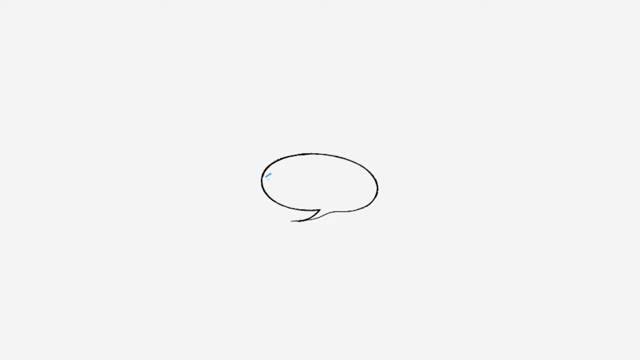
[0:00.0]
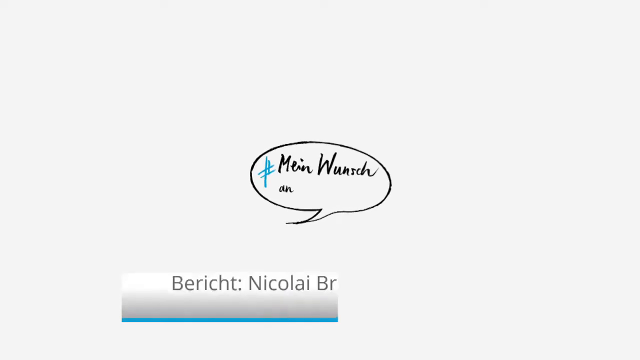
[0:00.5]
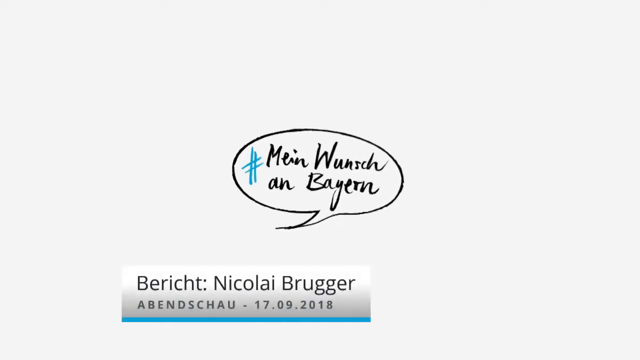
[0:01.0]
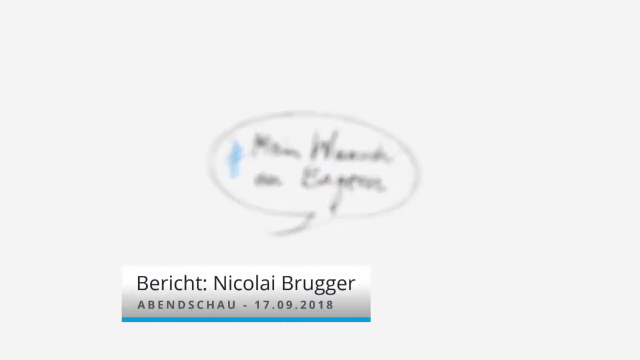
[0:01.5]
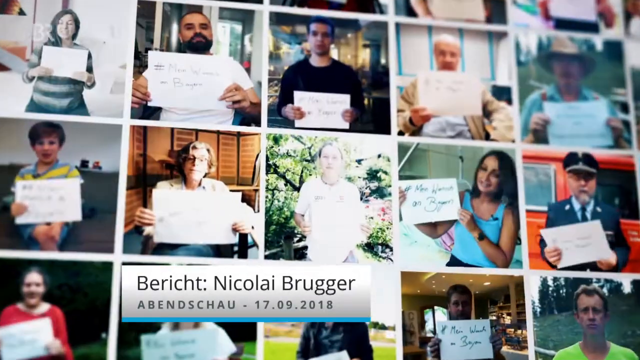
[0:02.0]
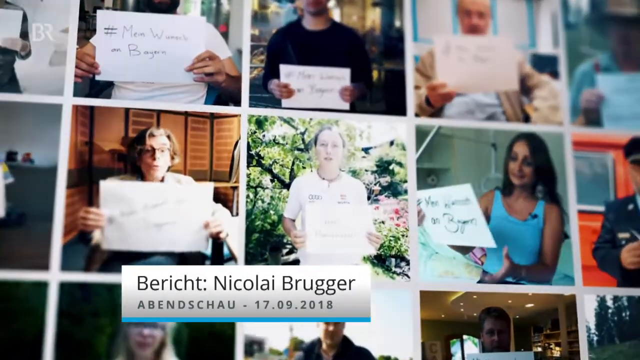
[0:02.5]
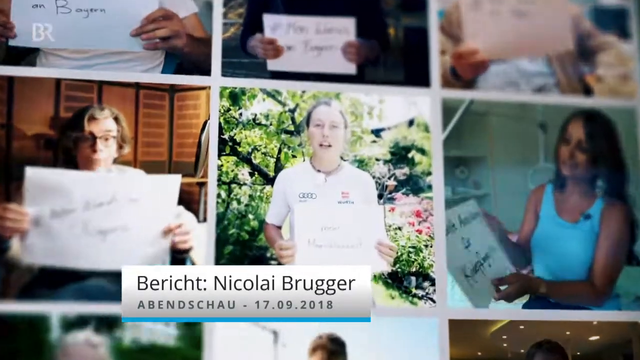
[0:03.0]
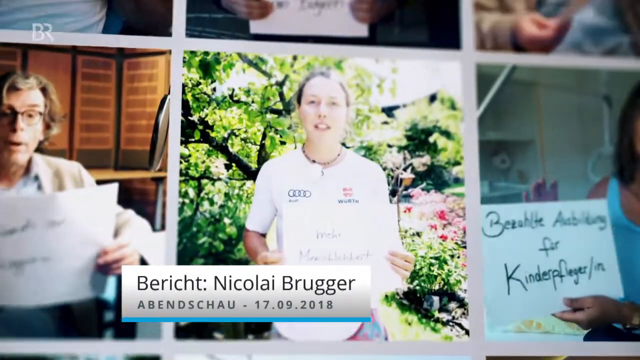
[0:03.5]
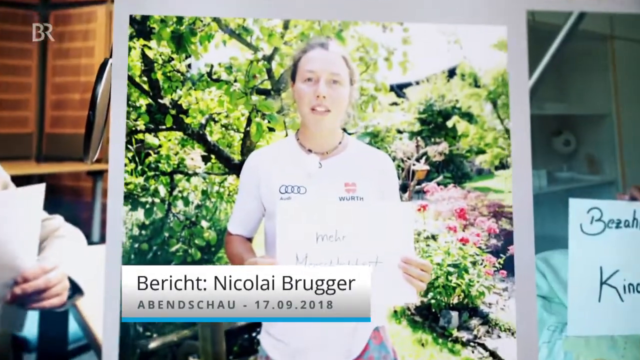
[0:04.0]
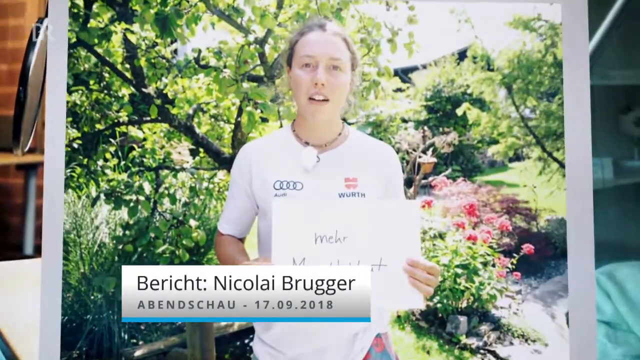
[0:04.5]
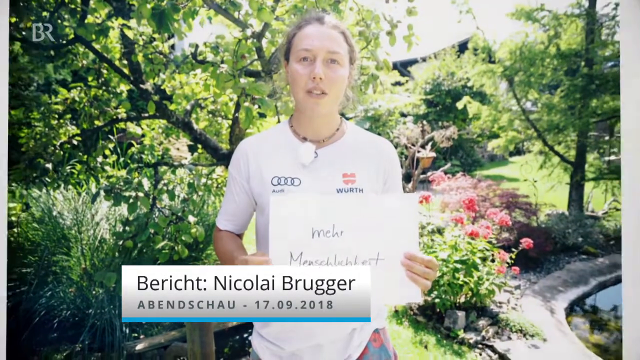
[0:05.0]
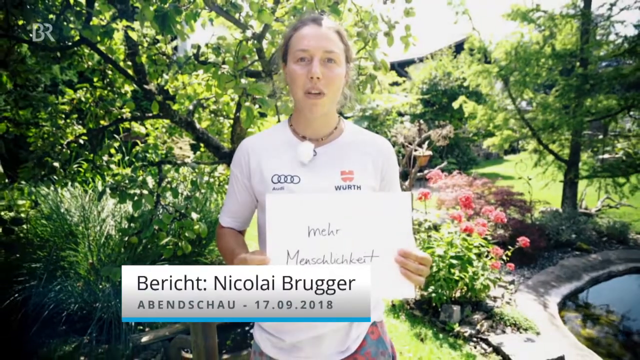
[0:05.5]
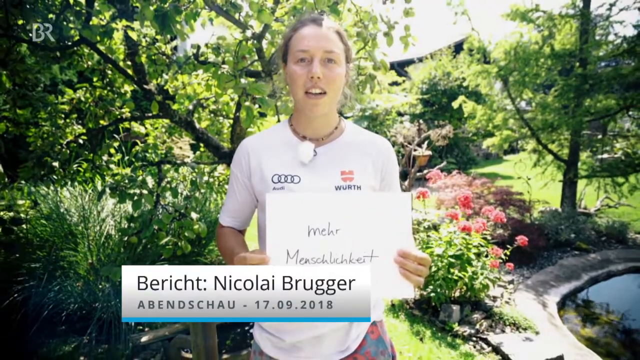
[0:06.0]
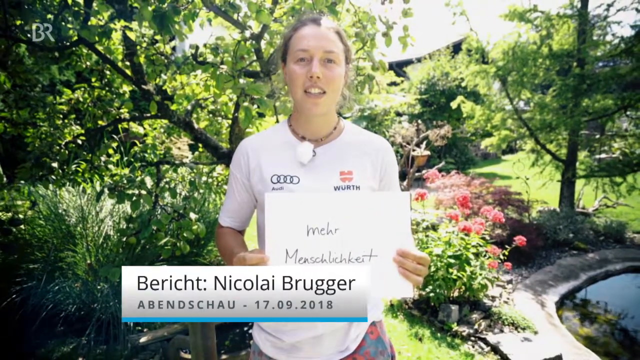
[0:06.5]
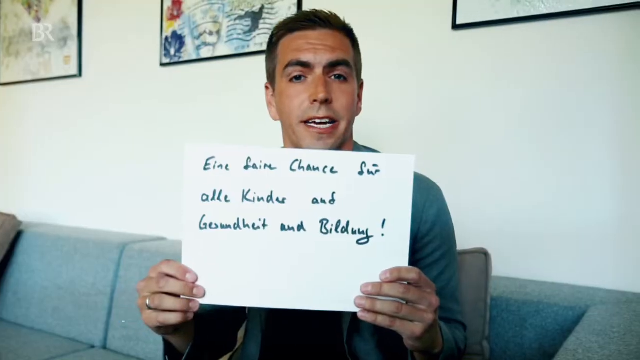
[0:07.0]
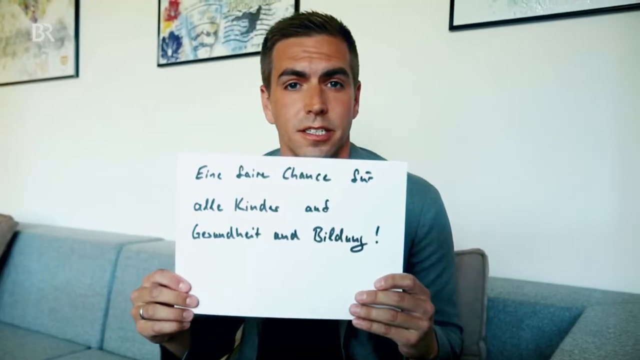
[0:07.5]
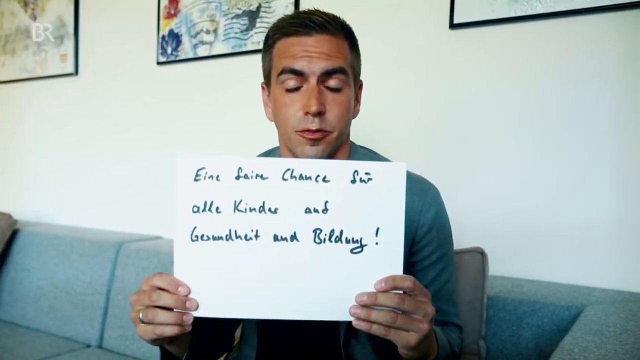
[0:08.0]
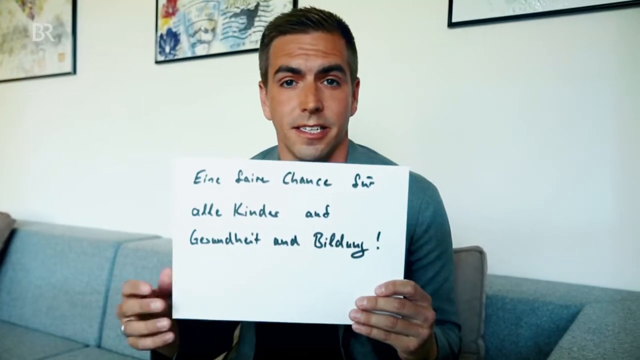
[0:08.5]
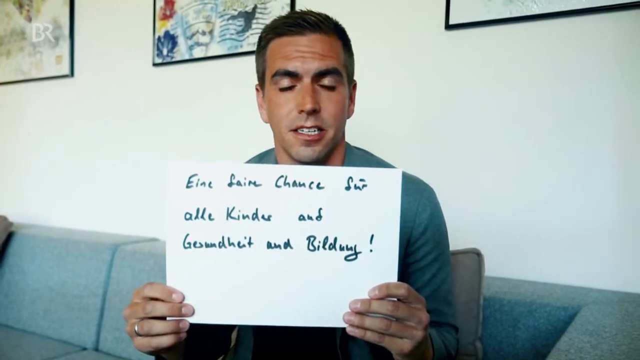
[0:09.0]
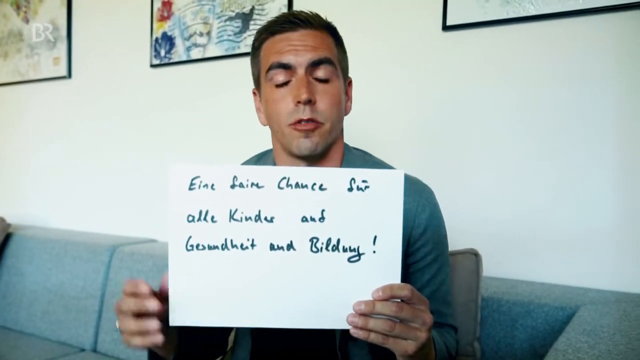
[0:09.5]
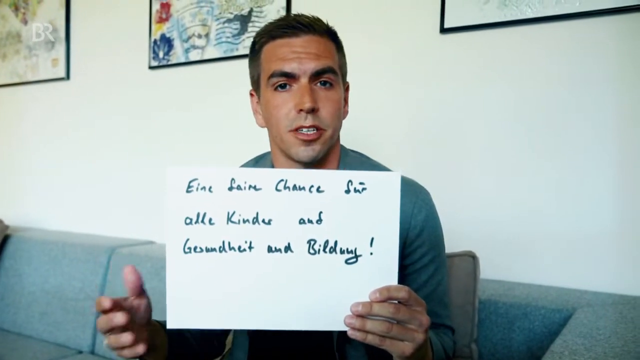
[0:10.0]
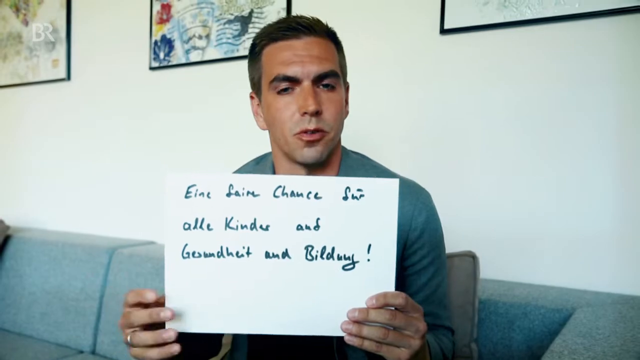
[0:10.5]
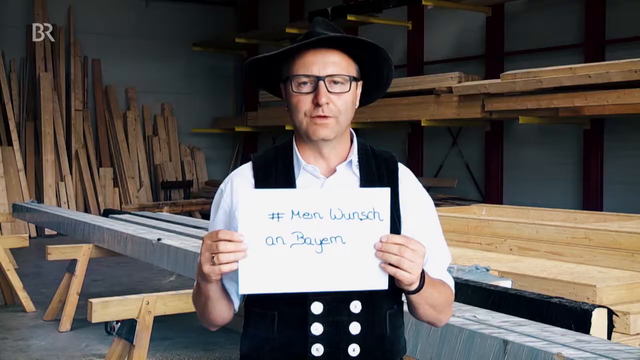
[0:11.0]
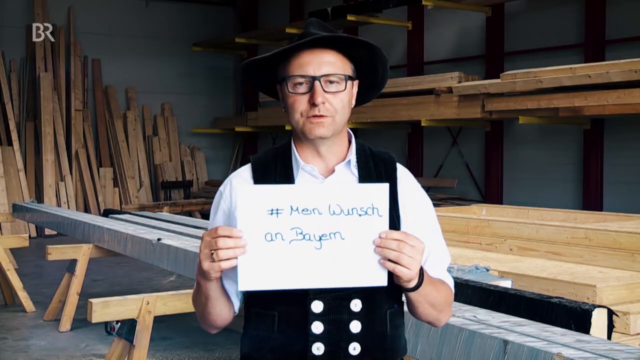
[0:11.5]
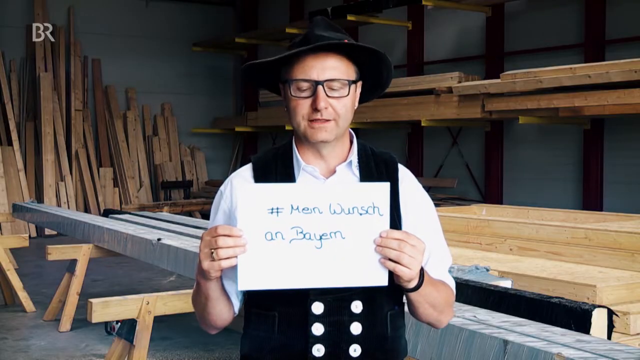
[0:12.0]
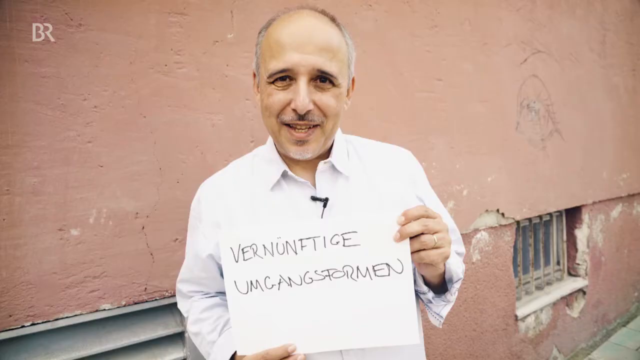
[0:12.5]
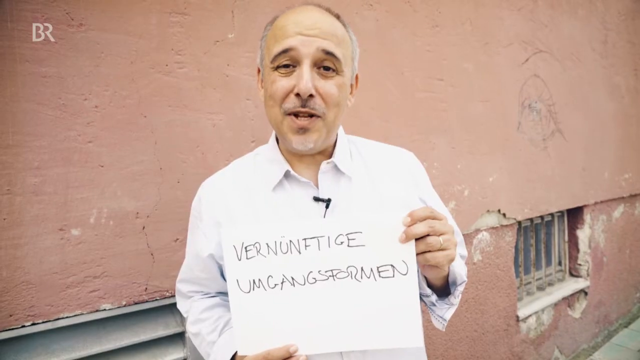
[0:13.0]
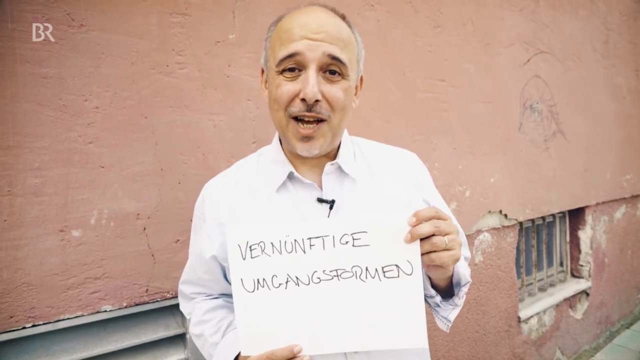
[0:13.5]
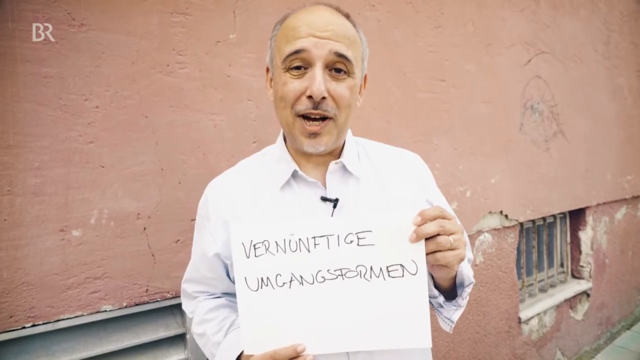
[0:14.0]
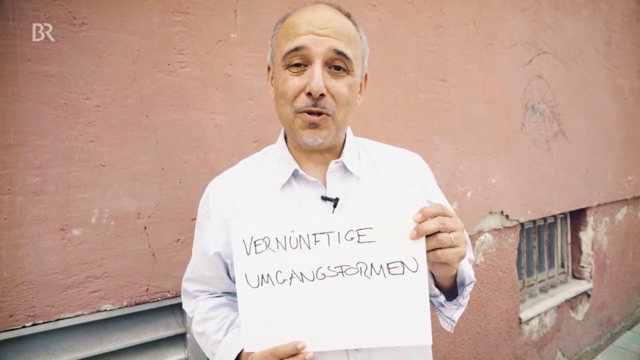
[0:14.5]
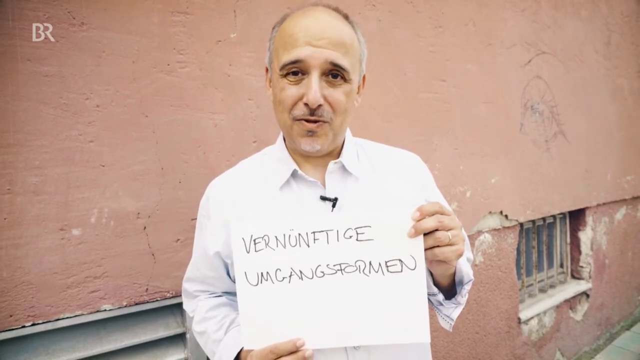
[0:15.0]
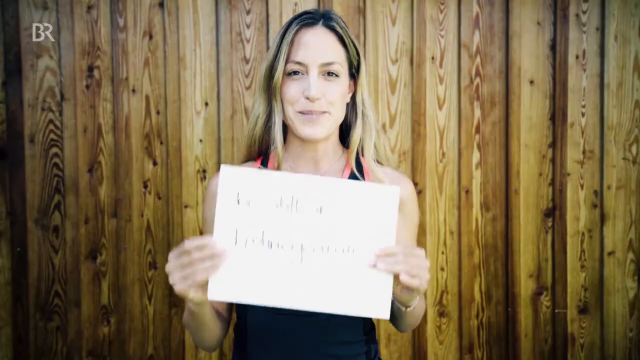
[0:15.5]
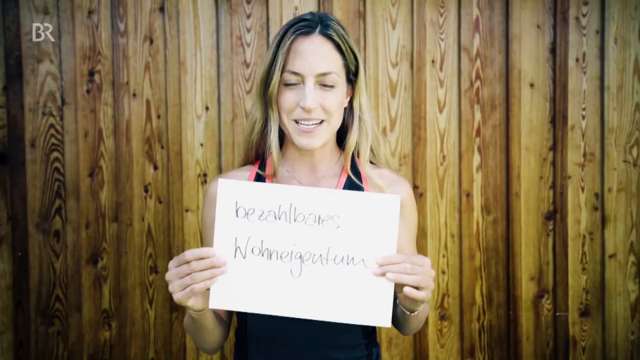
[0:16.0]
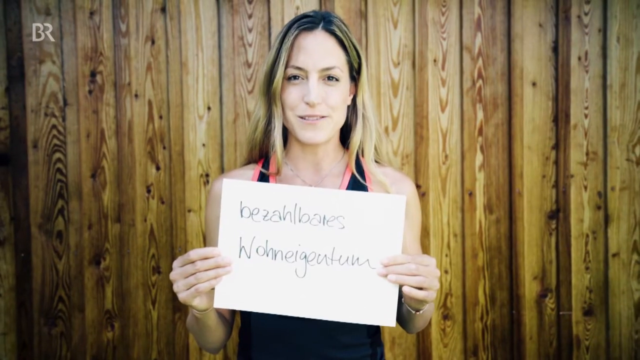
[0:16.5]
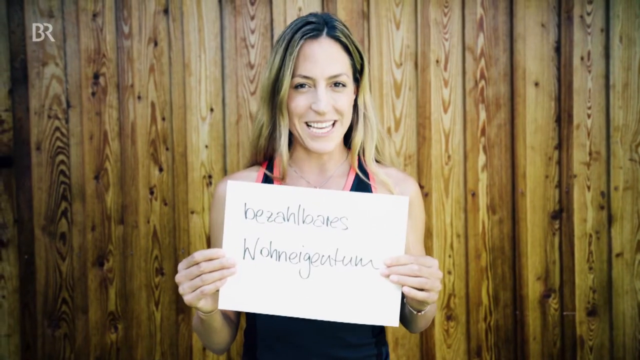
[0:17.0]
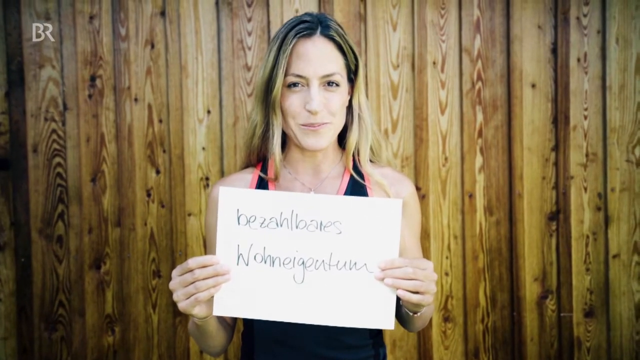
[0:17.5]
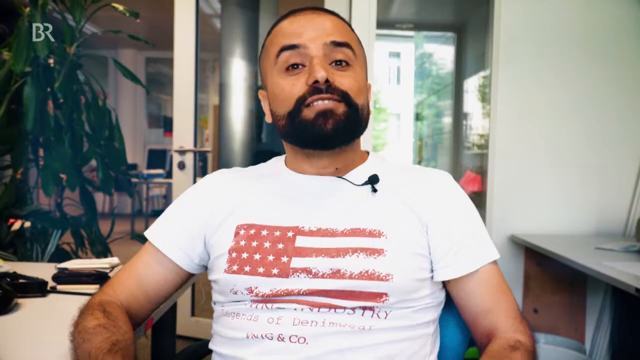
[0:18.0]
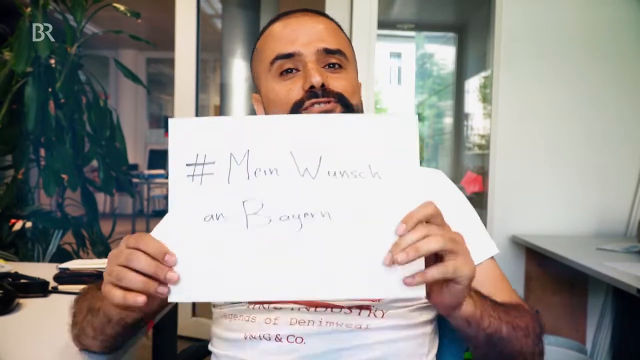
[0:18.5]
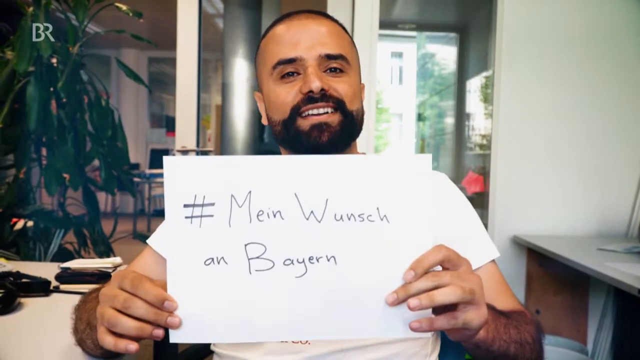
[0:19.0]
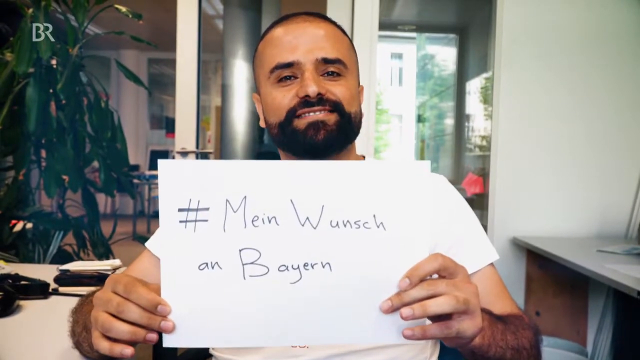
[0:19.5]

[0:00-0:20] German text on screen reads "Mein Wunsch an Bayern" along with "Bericht" and the date 17 9 2018. Many people appear in different squares of the screen, each holding up a note card with something written on it. The view focuses on one woman whose card begins with "mehr"; the rest is hard to see. She looks kind of sporty and has brown hair. Next, a man holds up a card that includes the word "Gesundheit". A man in traditional clothing follows, holding a sign that says "#Mein Wunsch an Bayern", in front of a lot of wood. Then another man appears, but his sign cannot be read.